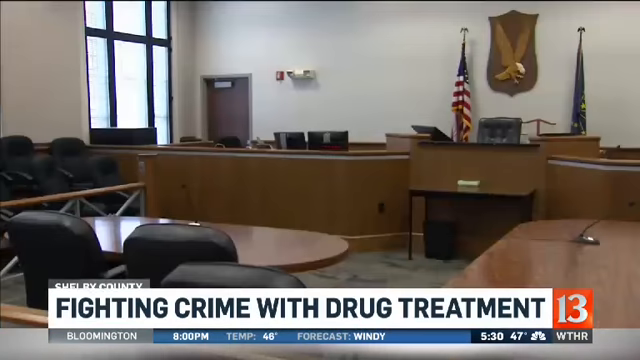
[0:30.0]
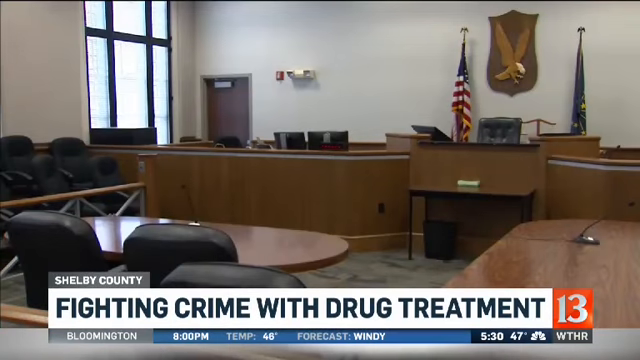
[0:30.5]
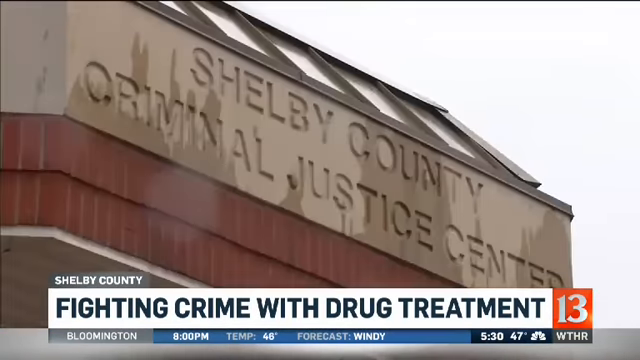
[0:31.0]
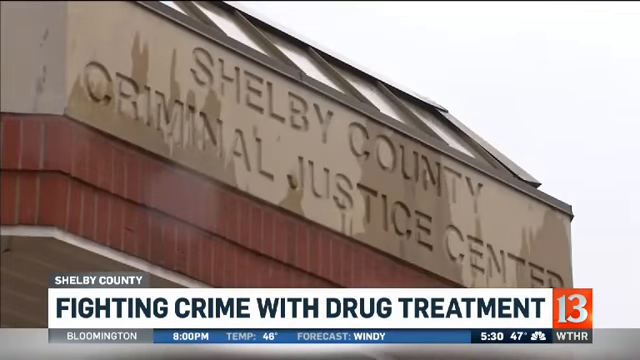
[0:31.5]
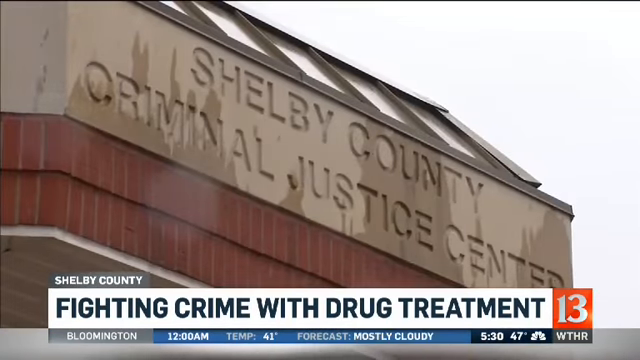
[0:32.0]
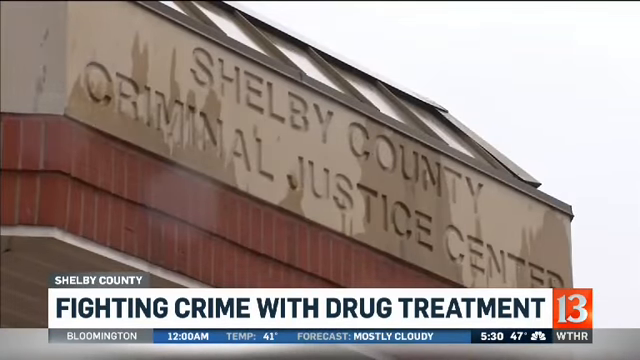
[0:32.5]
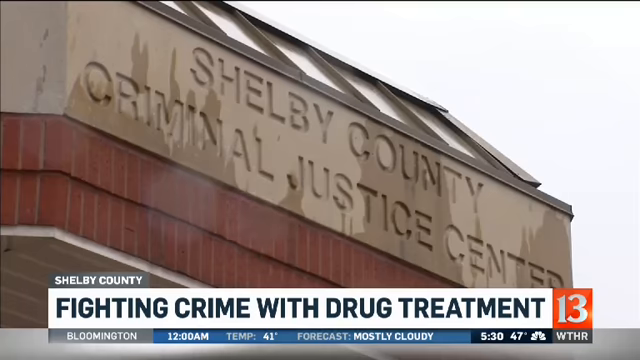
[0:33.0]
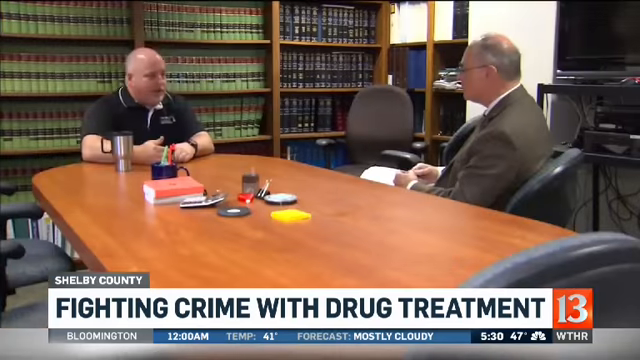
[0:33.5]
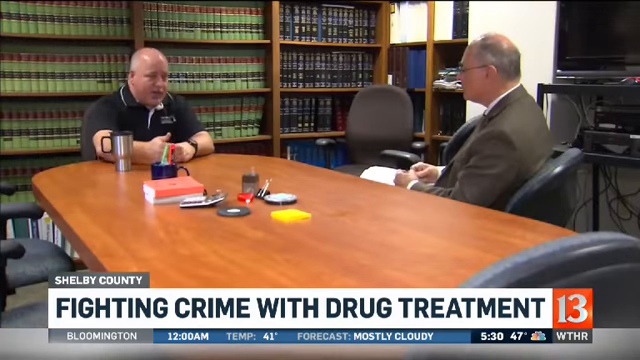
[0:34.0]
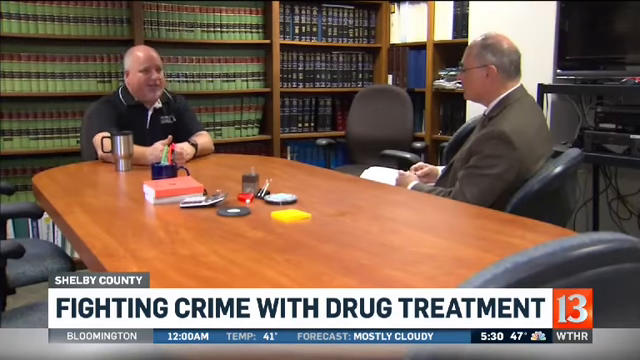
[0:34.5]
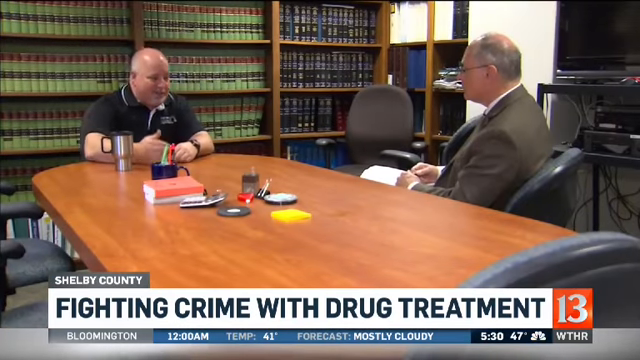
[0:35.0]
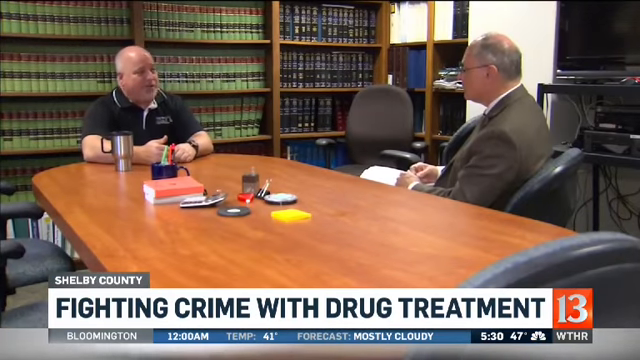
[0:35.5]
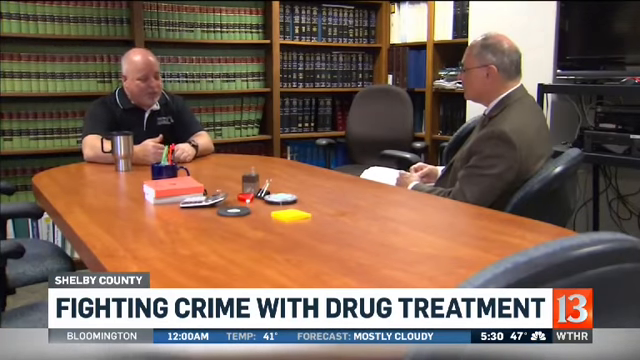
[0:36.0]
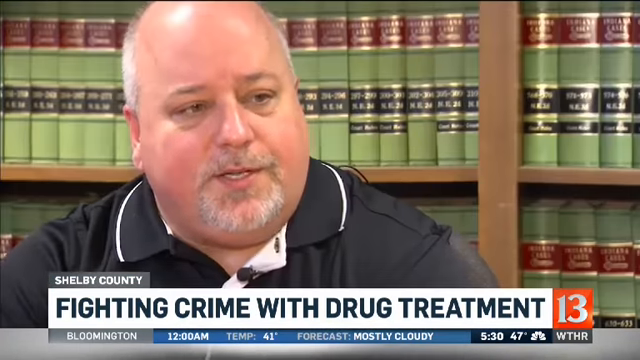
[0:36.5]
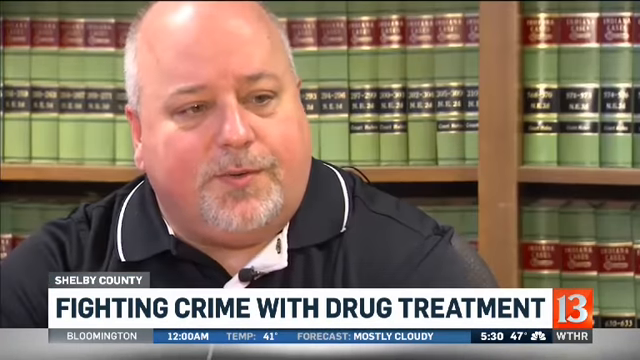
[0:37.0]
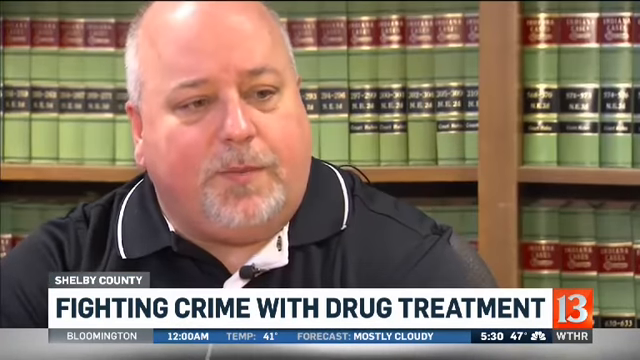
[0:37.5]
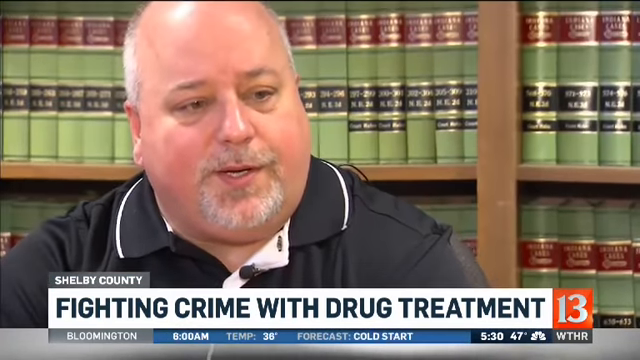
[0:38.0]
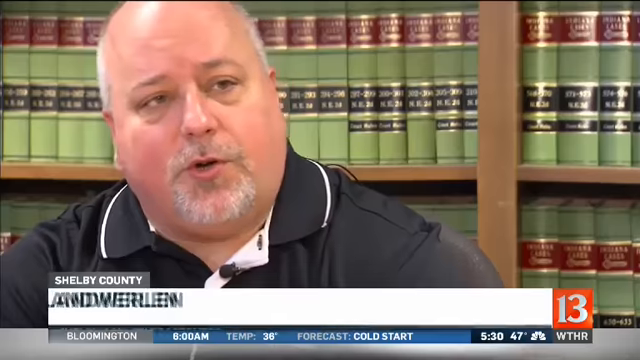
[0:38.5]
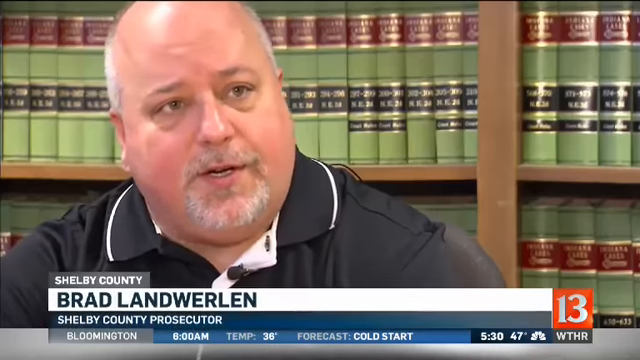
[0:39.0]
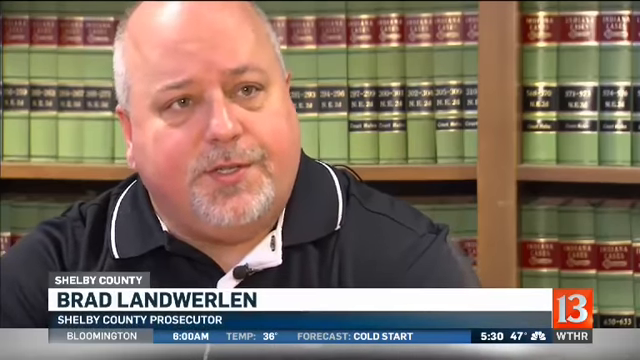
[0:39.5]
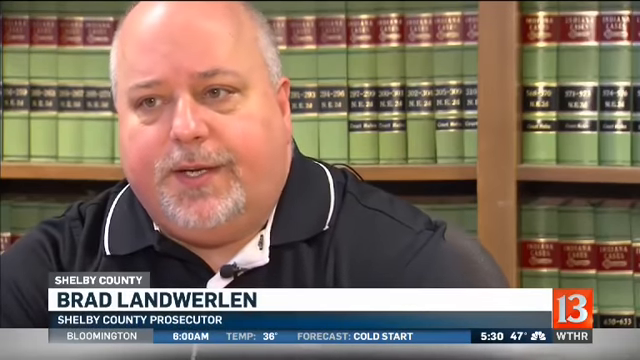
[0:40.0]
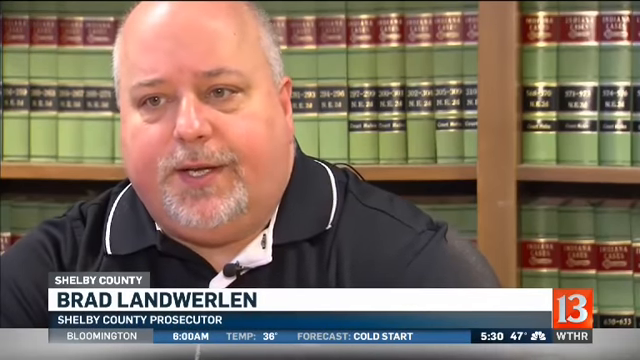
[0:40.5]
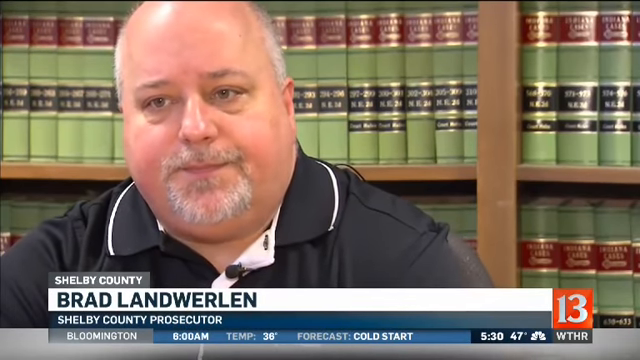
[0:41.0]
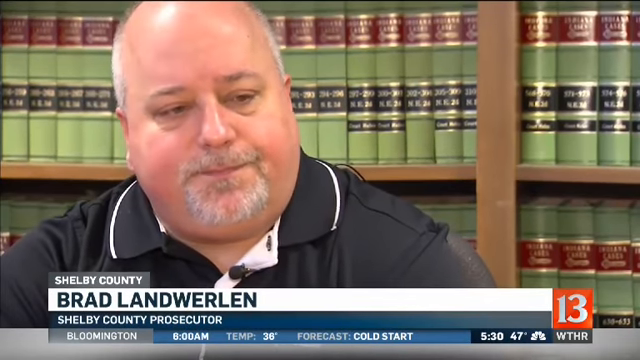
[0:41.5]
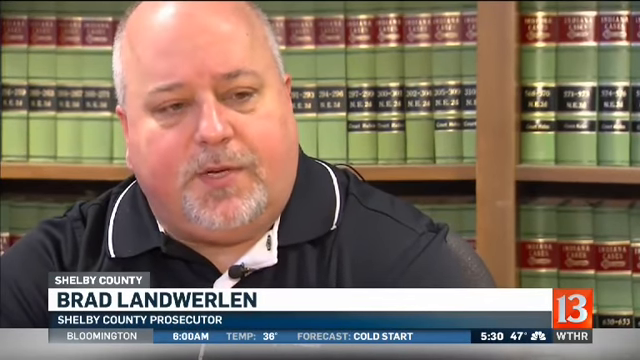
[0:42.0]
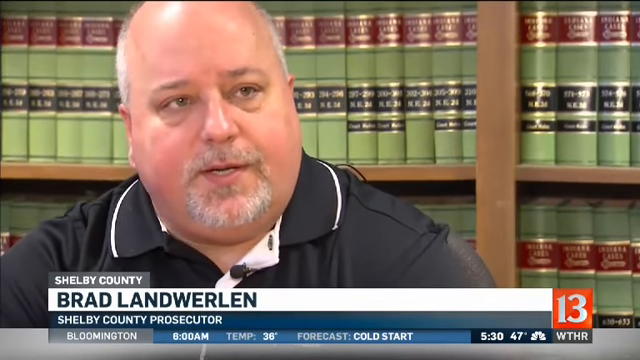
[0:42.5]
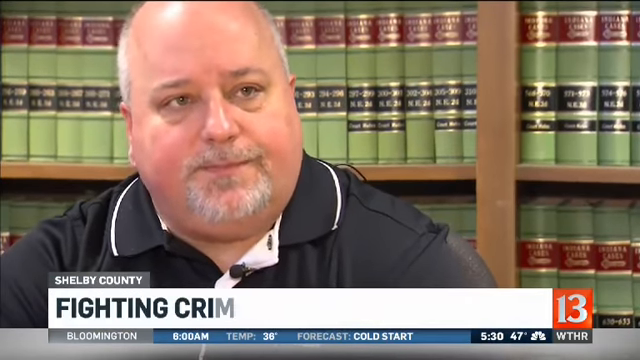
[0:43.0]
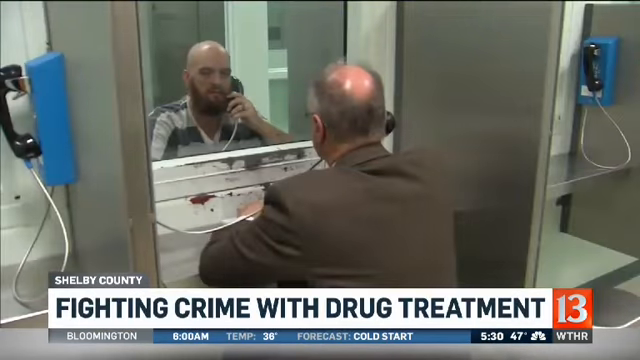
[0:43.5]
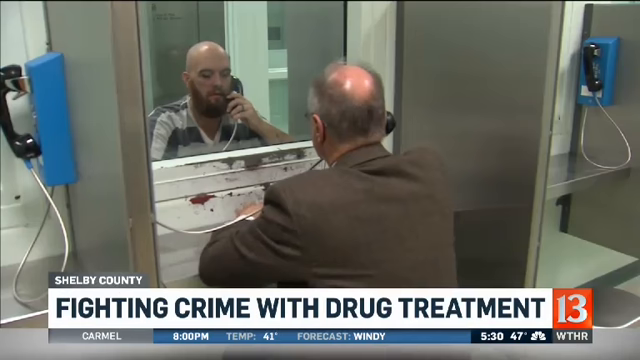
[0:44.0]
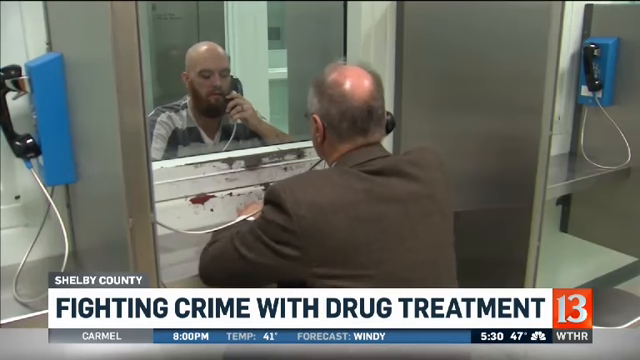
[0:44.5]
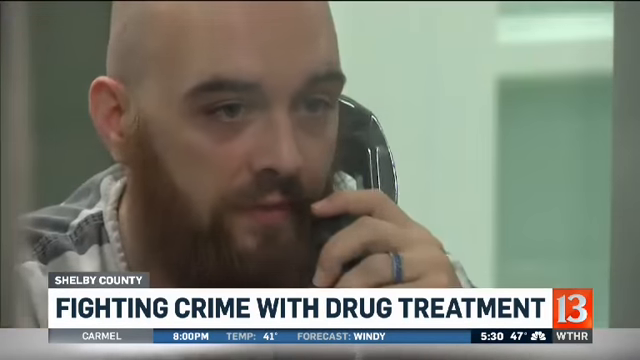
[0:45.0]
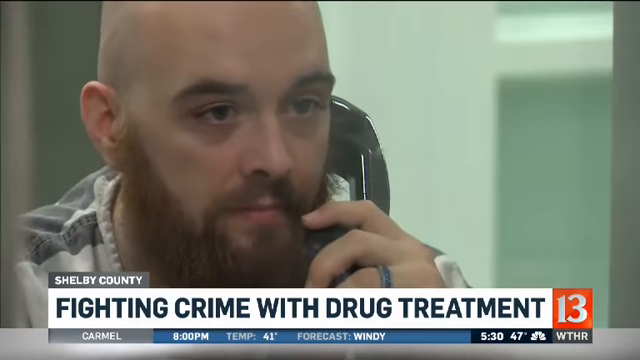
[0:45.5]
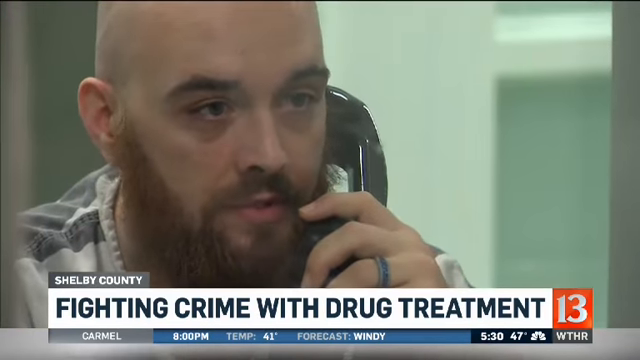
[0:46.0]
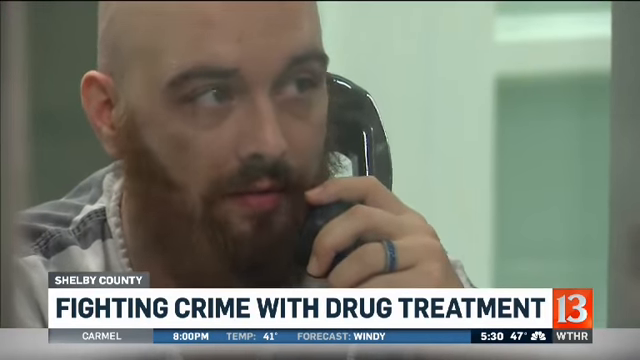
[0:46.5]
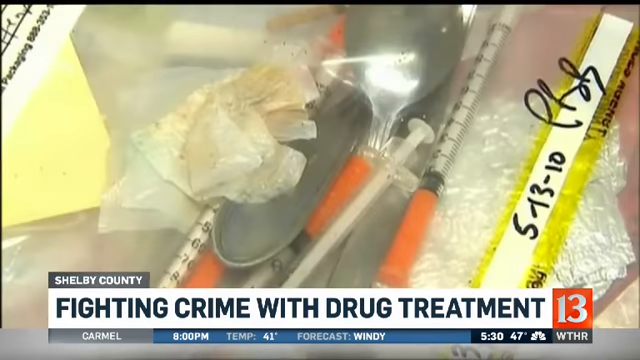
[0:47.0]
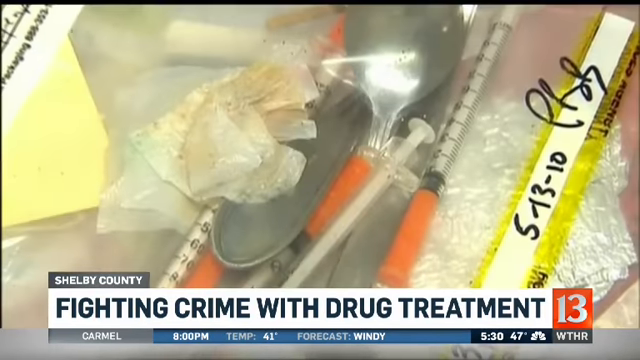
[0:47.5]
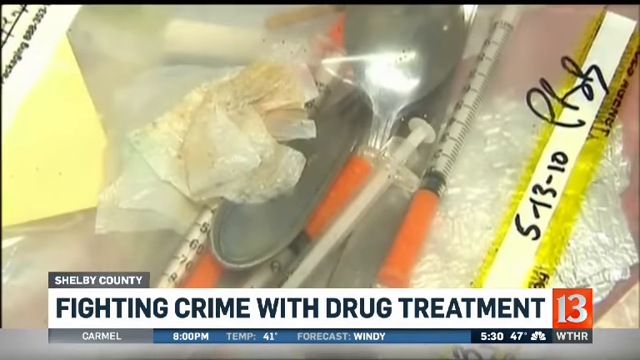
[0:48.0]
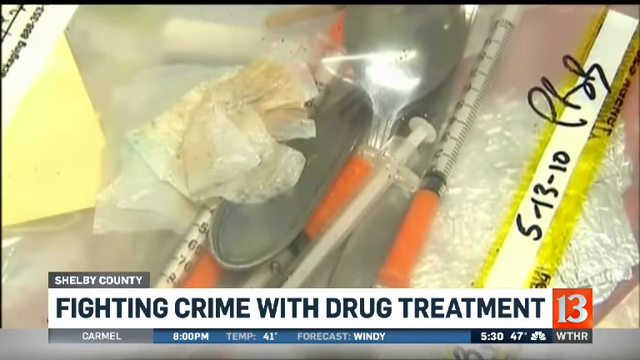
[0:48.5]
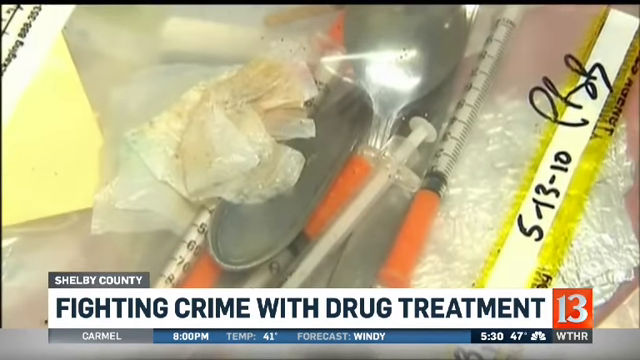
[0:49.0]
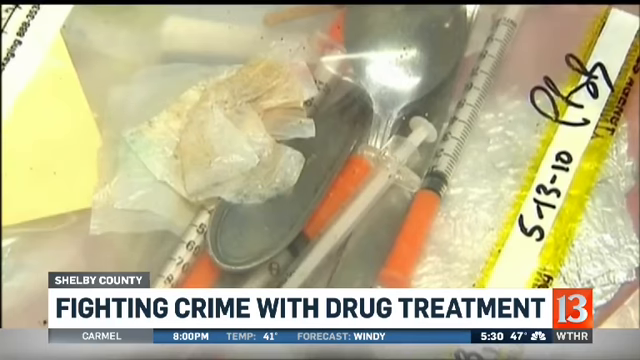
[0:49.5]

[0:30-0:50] An oversized man in a black shirt sits on a chair with his hands on the table, with a shelf of books behind him, apparently in a library. A subtitle comes across the news banner: "fighting crime with drug treatment". The video then shows what looks like a courtroom, with the US flag, another flag, a white interior and an eagle on a badge in the middle. It cuts to the outside of the Shelby Criminal Justice Center under a very cloudy sky. Next, the man in the black shirt, who is bald with gray hair, is seen with a full view of the table, followed by a view of another man sitting across from him on the left, holding a book and a pen as he speaks to him; the man in the black shirt is named Brad Landfelland, the Shelby County Prosecutor. The video then moves to a scene in Portland showing a bald prisoner with a gray-ginger head in a striped shirt, taking a call with the man who was interviewing the Shelby man. An evidence bag containing spoons, syringes and a few other items is shown, followed by close-up shots of a man in prison.